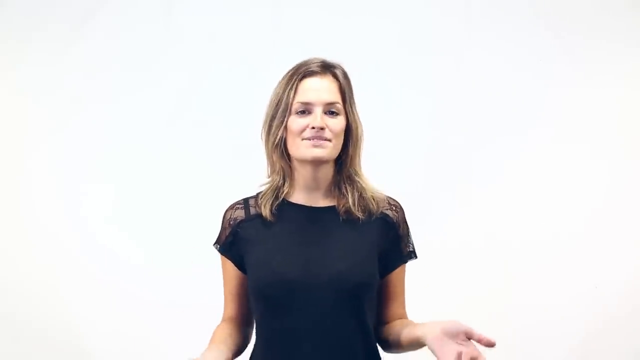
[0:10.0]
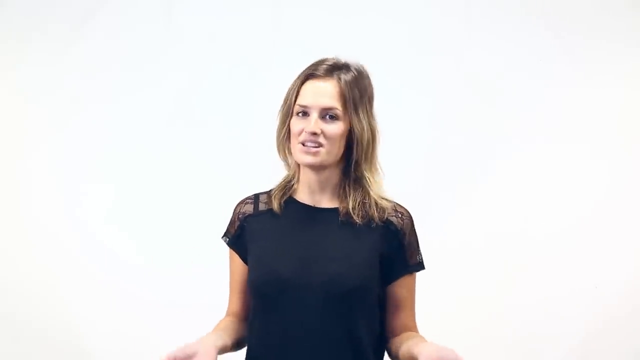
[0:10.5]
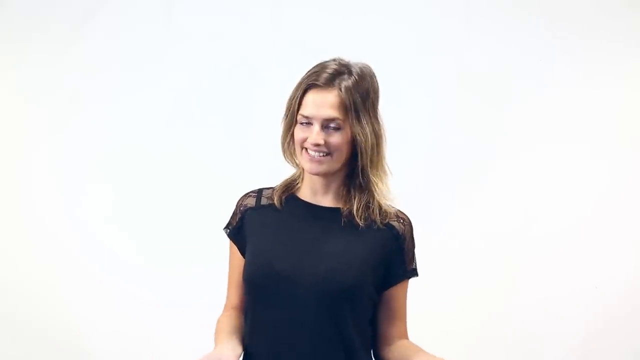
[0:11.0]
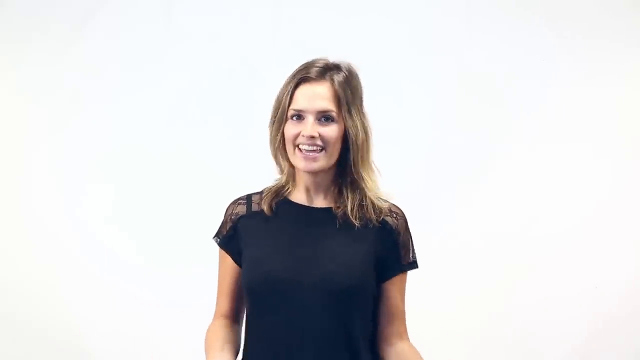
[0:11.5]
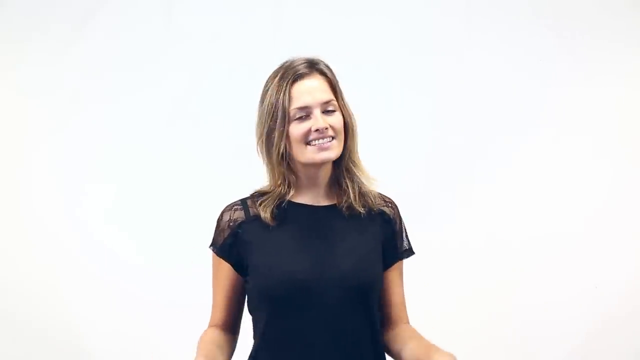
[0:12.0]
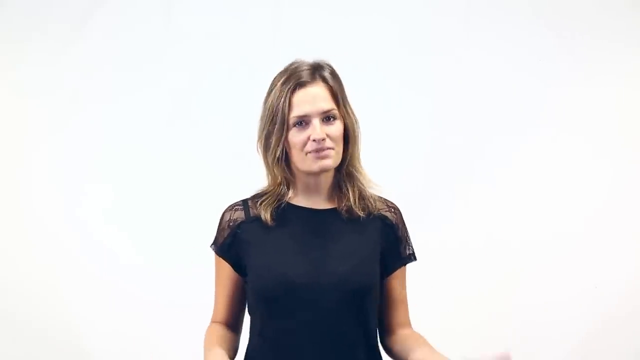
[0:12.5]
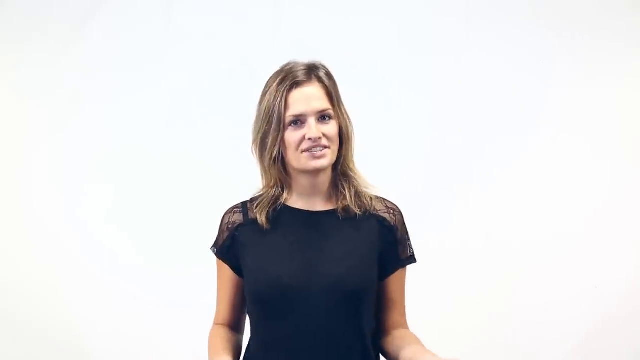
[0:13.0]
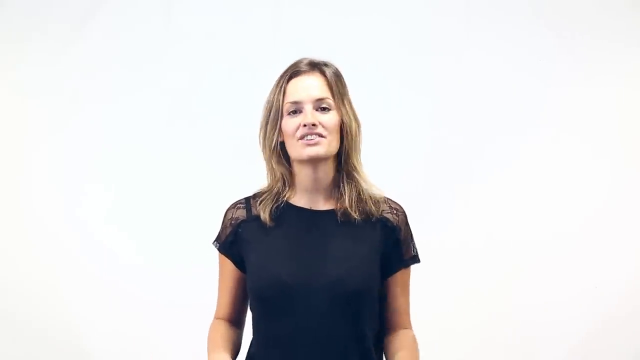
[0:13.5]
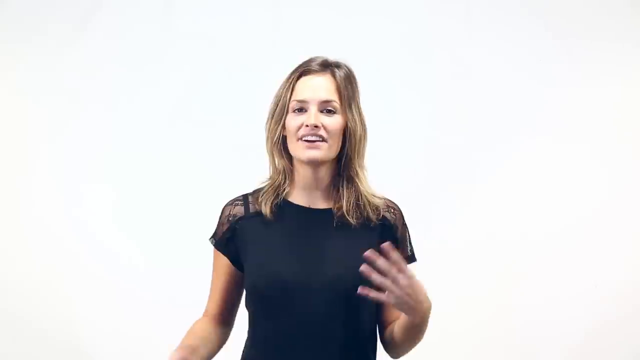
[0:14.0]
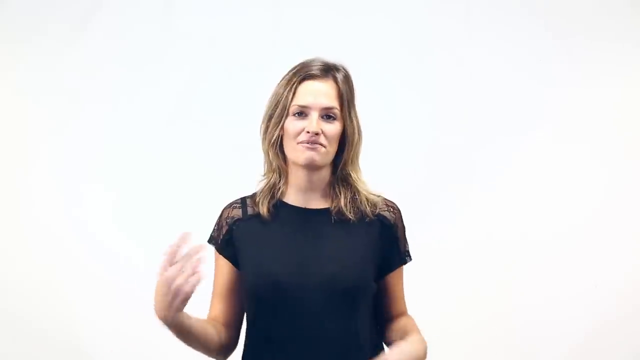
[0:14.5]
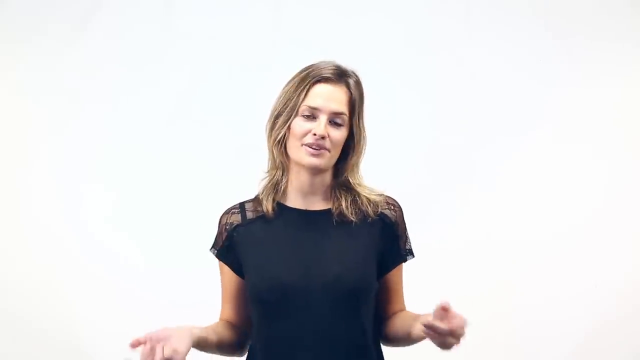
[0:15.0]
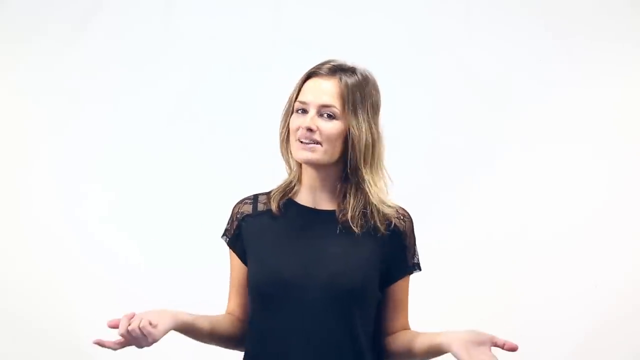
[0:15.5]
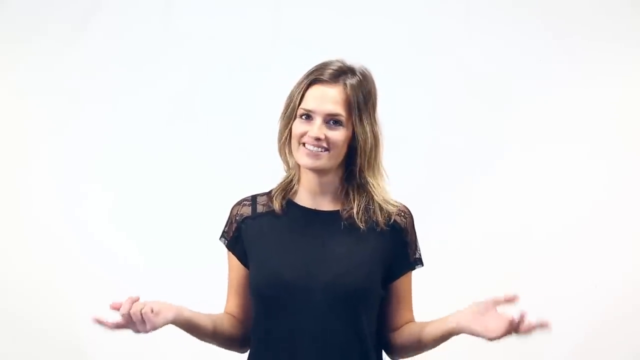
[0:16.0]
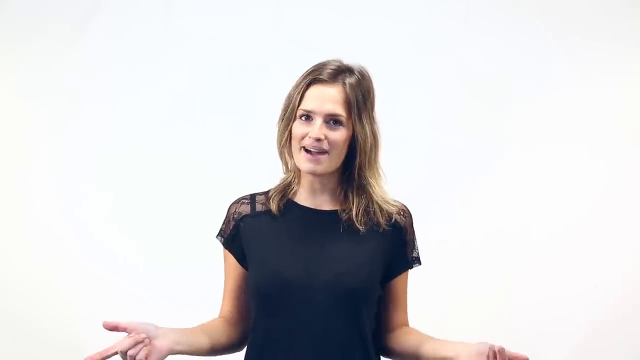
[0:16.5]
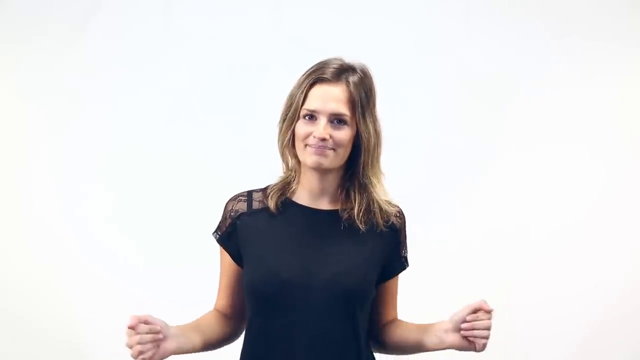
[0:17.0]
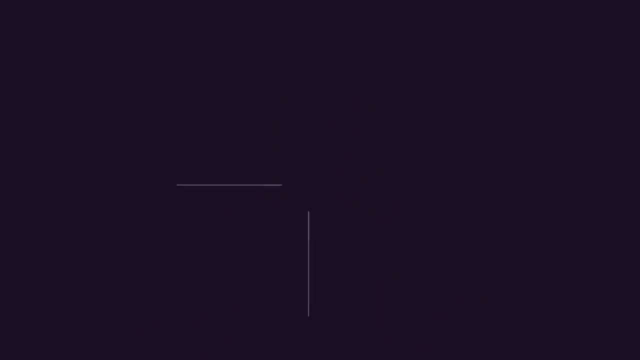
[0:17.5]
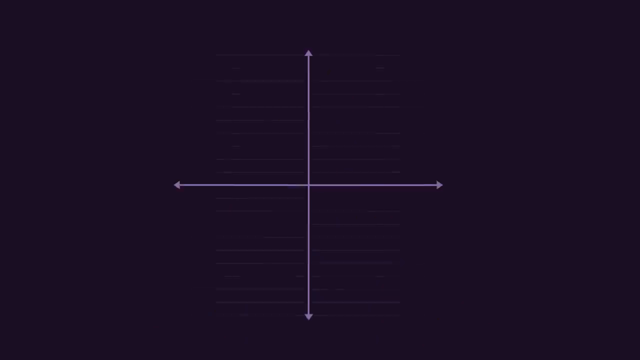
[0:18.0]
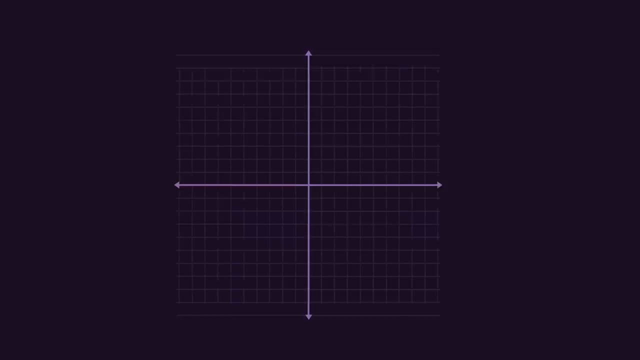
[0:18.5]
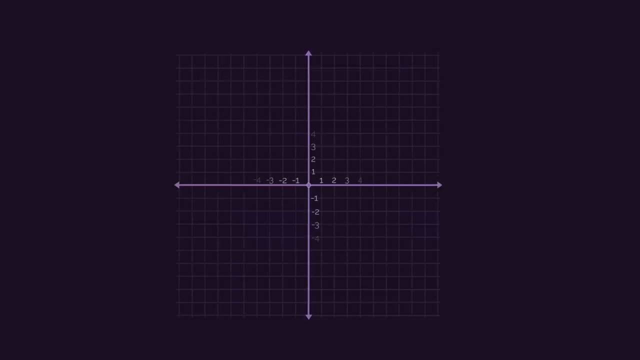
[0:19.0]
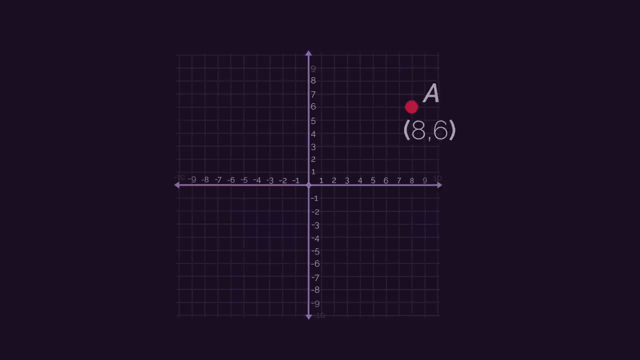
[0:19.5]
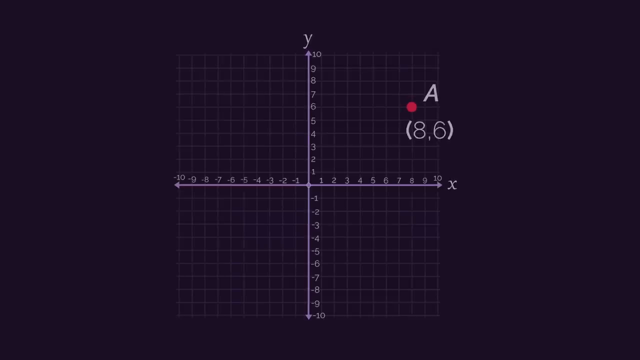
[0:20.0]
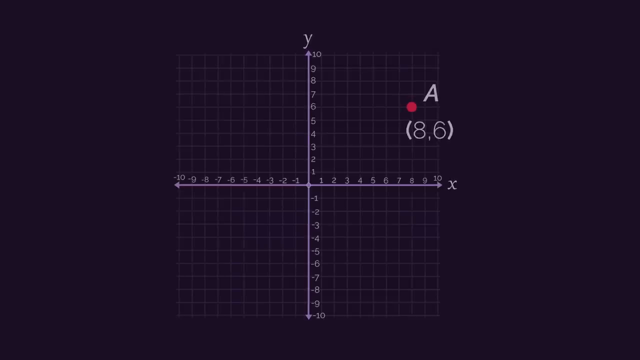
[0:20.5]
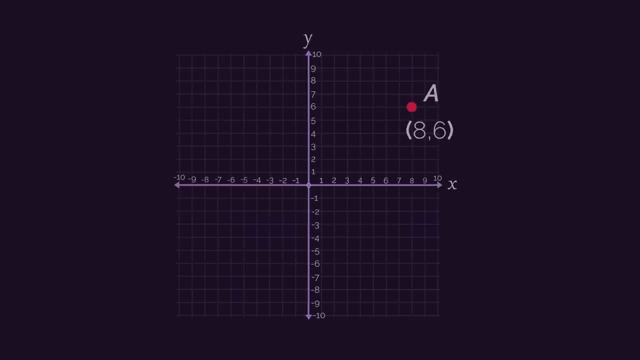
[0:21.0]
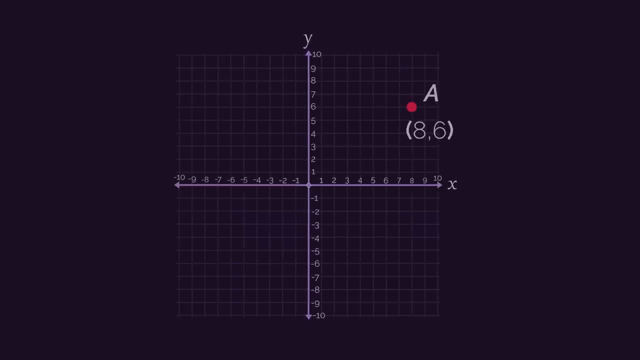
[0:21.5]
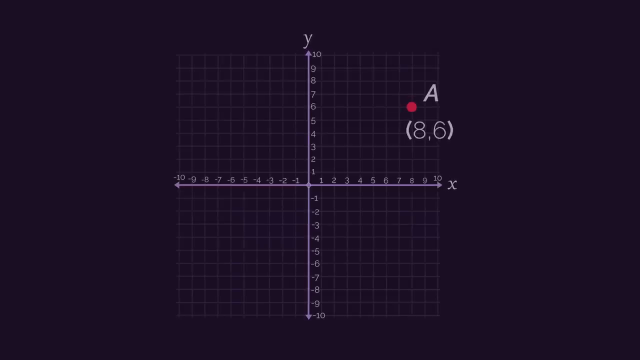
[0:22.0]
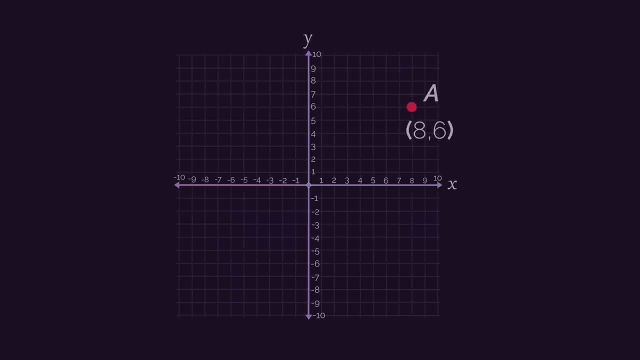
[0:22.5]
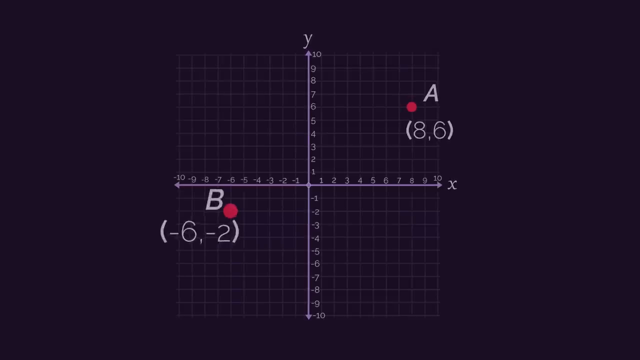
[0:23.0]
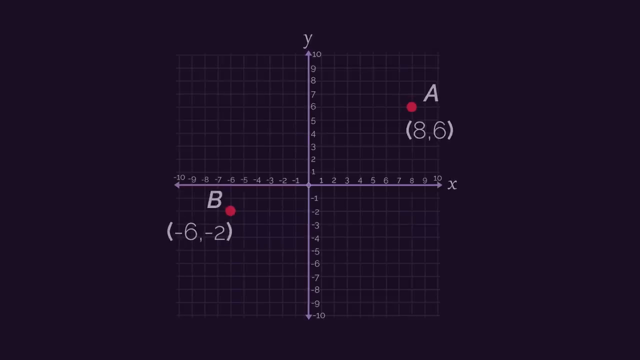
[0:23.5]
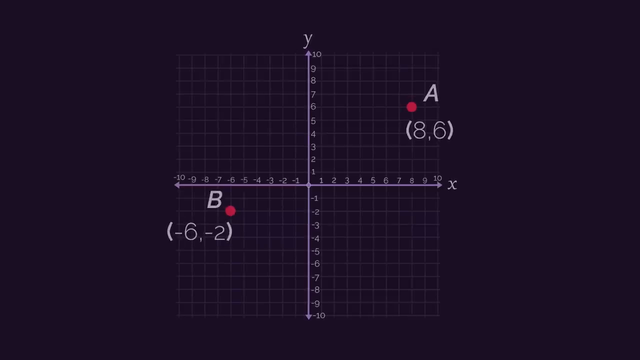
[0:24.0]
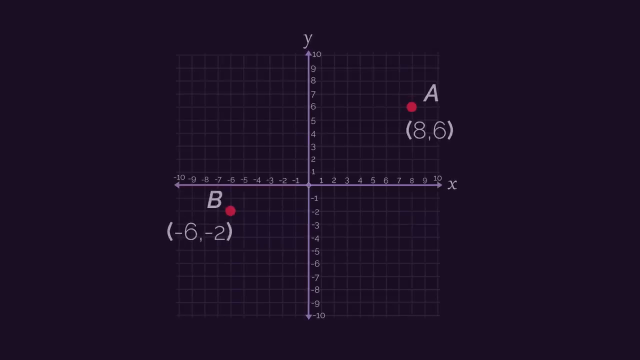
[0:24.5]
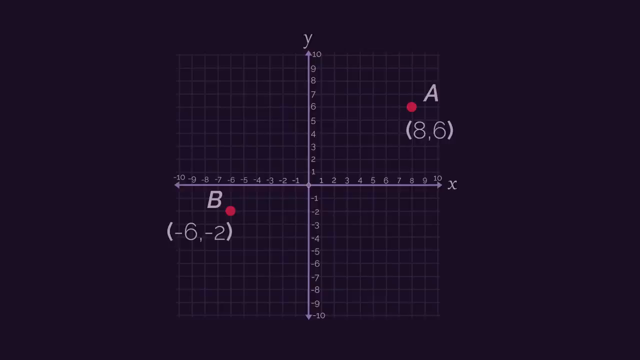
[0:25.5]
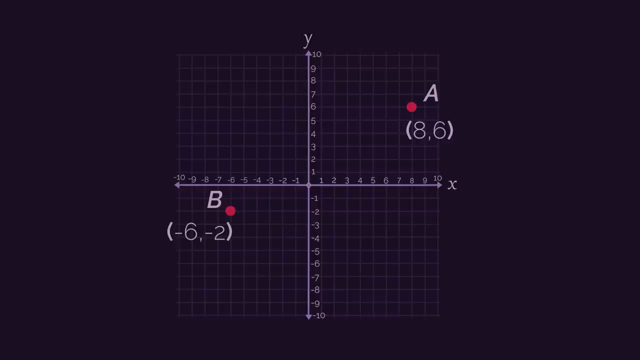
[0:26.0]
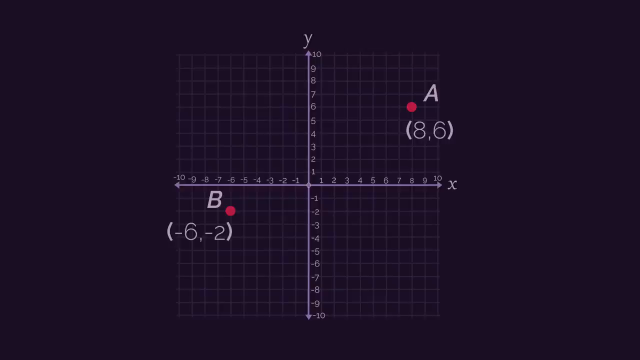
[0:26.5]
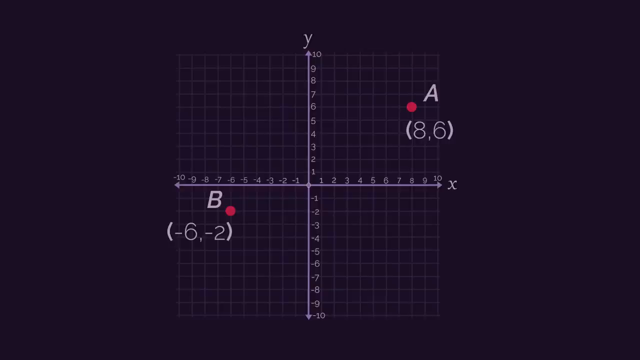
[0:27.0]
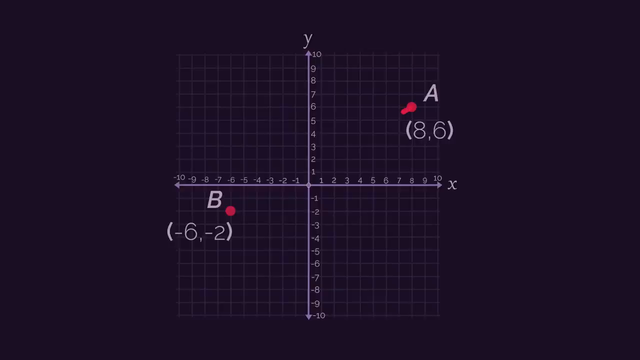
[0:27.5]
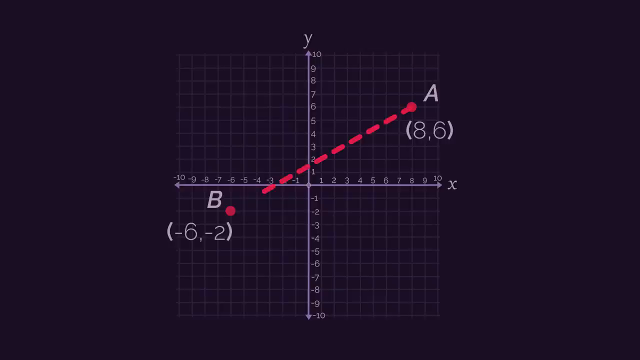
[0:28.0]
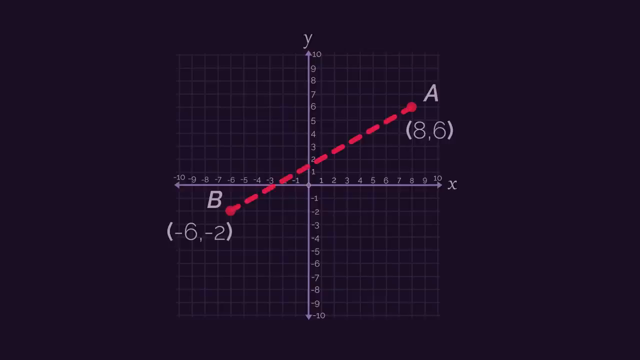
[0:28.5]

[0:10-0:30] A woman stands looking at the camera, seen from the waist up against an all-white background. She is Caucasian, with shoulder-length brown hair, and wears a black t-shirt with lace on the shoulders. She talks, making lots of gestures with her hands, and smiles, seeming very professional. The video then cuts to a black background with a graph showing point A, with 8 and 6 in parentheses underneath it, and then point B in another quadrant with negative 6, negative 2. A red dotted line is drawn between them. The graph is white on the black background, with a Y and an X axis, and numbers up to 10 in all four directions.